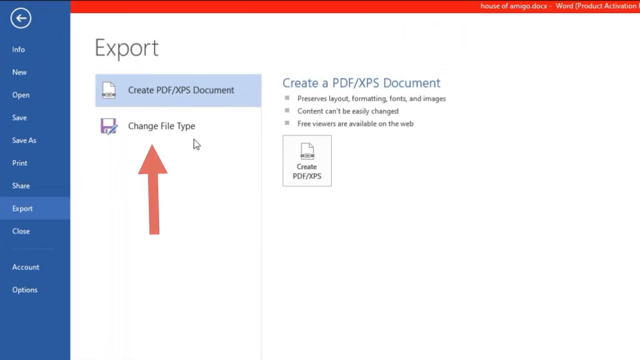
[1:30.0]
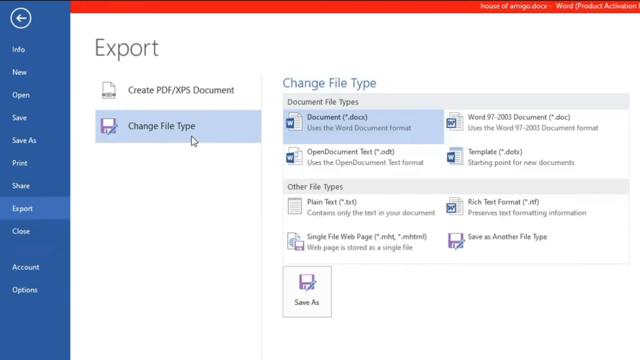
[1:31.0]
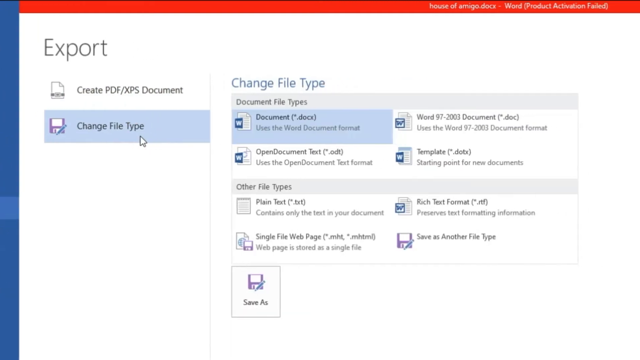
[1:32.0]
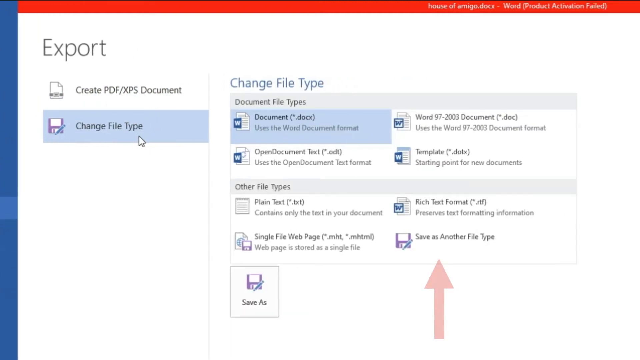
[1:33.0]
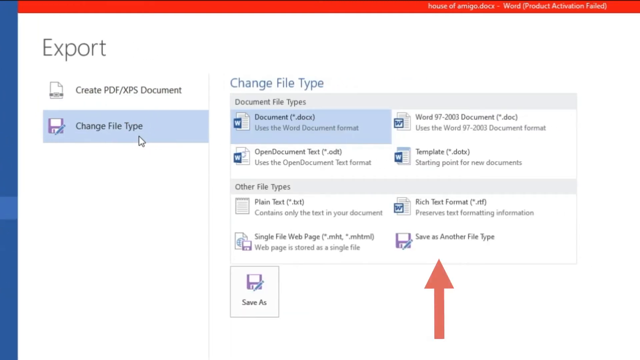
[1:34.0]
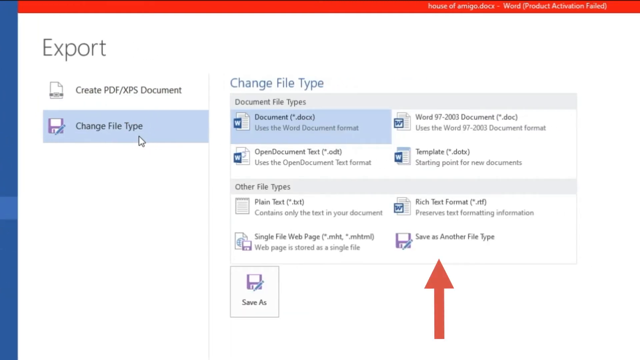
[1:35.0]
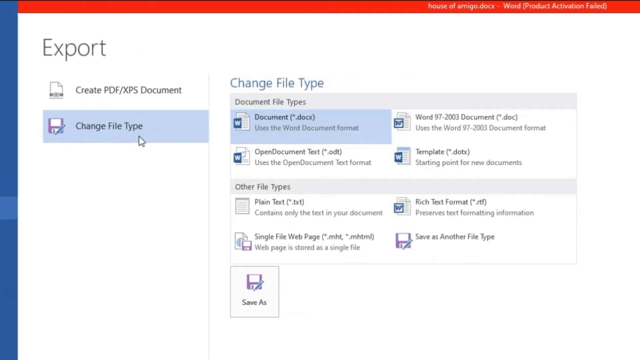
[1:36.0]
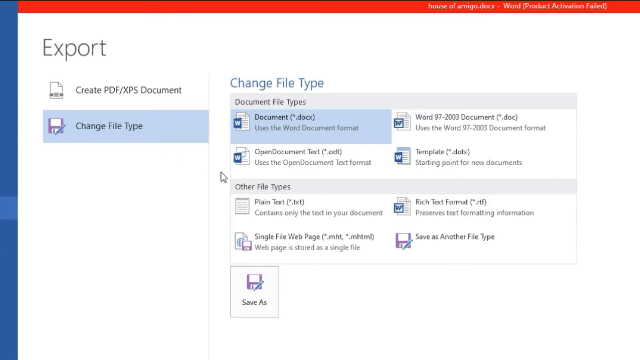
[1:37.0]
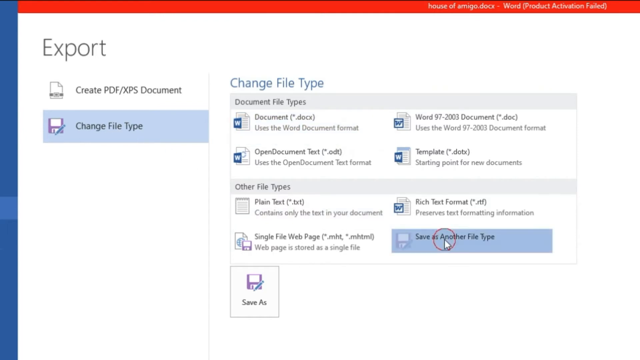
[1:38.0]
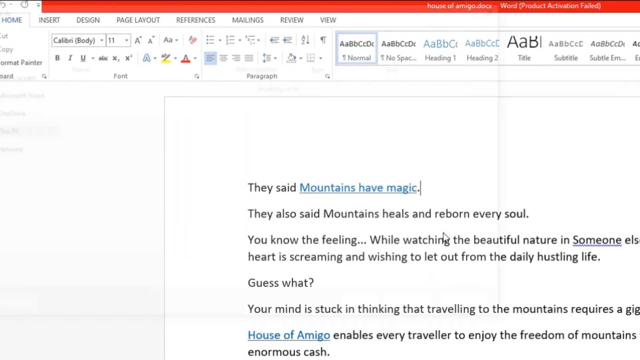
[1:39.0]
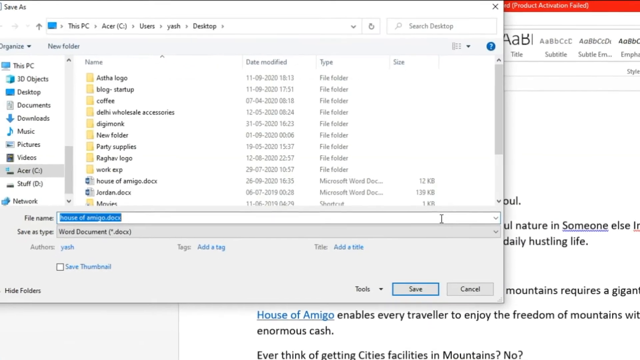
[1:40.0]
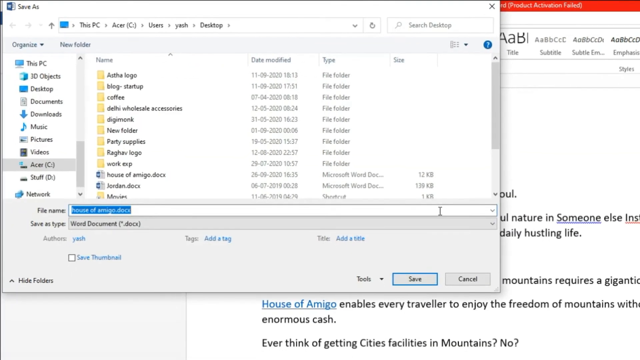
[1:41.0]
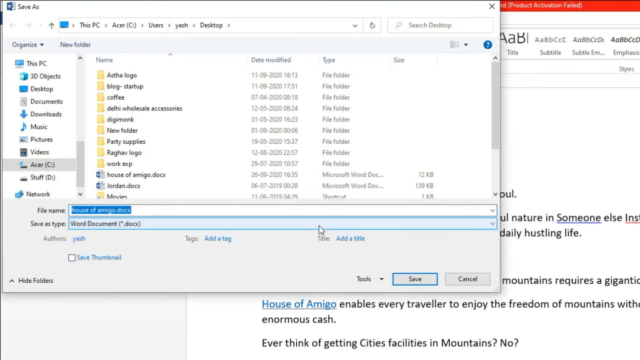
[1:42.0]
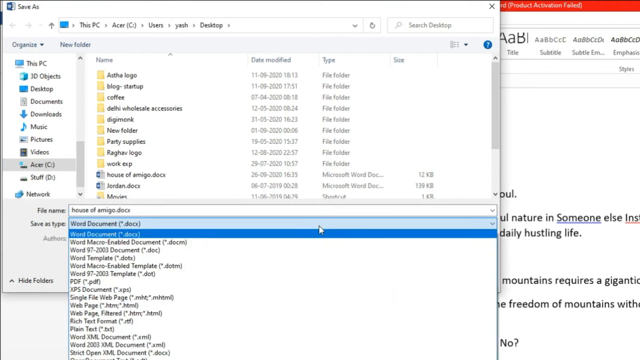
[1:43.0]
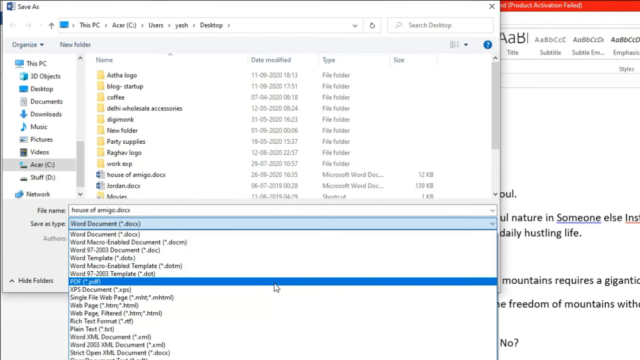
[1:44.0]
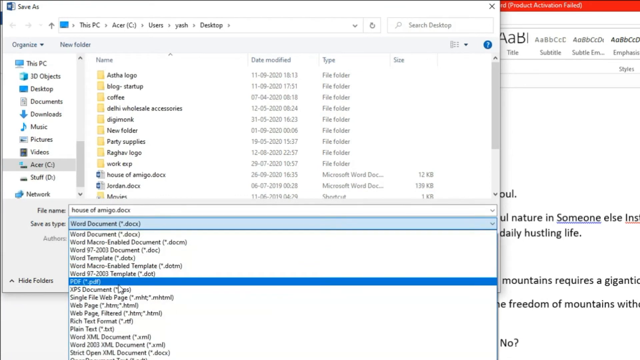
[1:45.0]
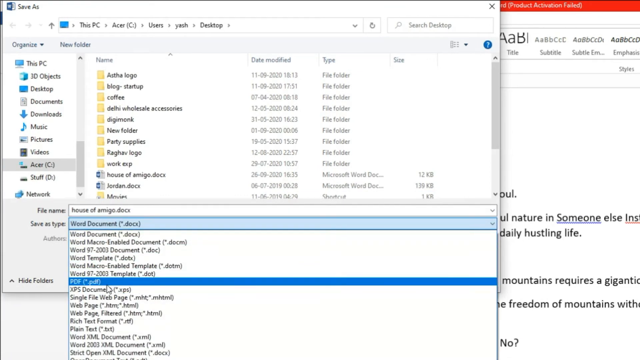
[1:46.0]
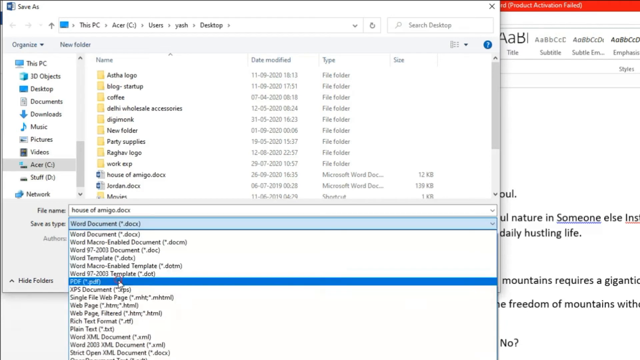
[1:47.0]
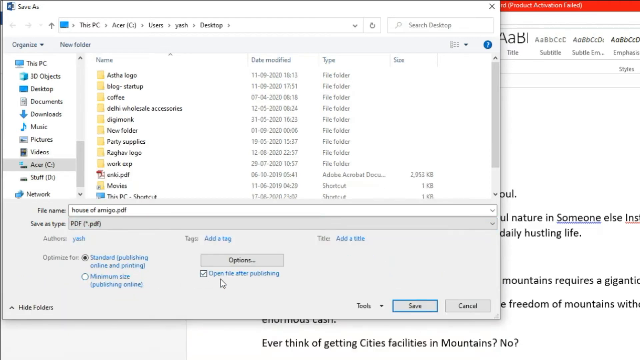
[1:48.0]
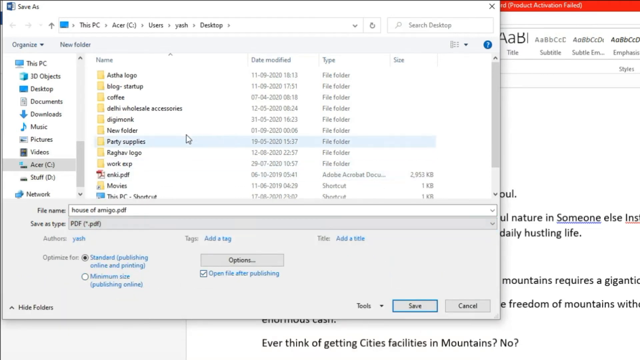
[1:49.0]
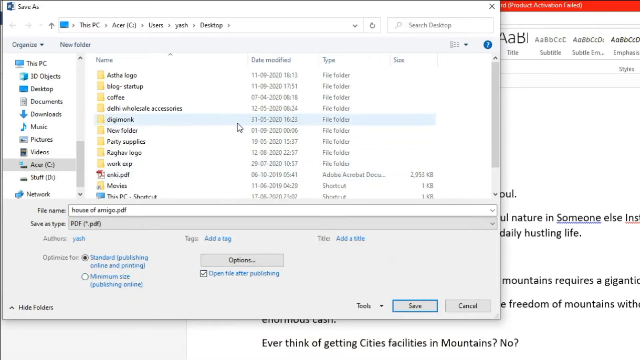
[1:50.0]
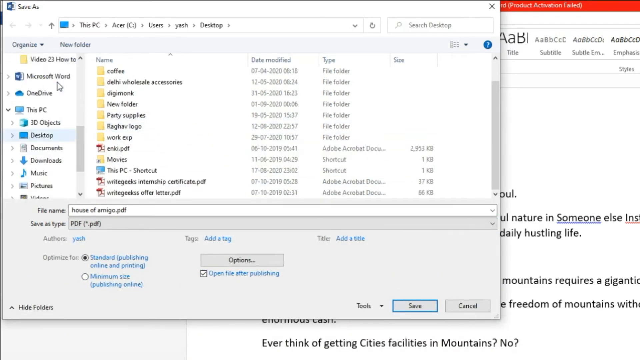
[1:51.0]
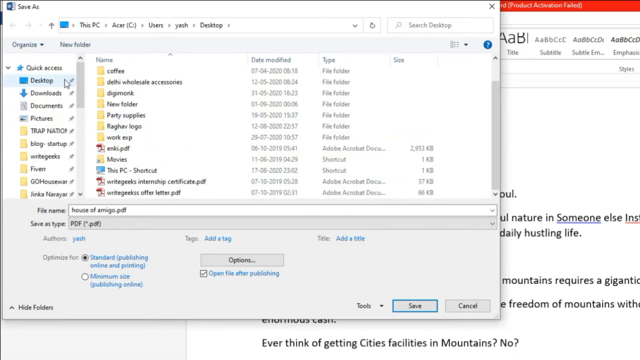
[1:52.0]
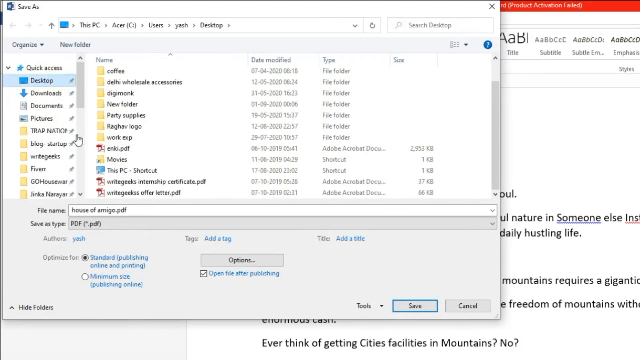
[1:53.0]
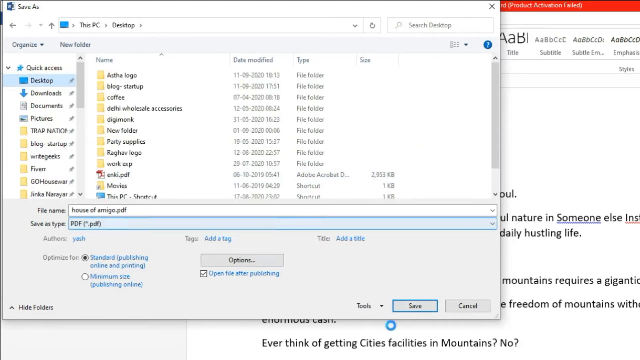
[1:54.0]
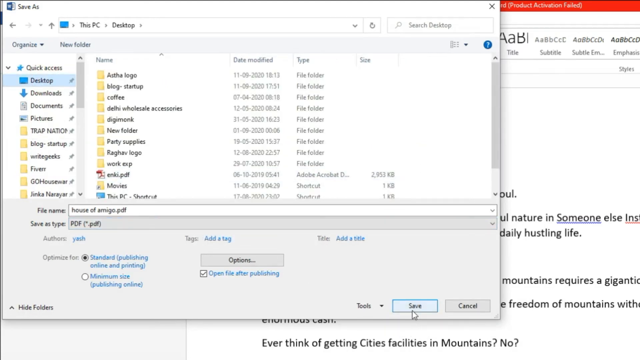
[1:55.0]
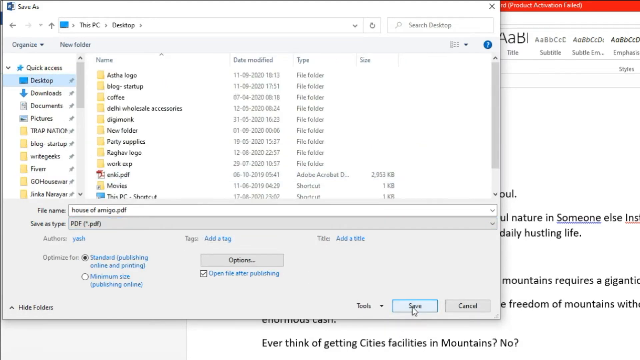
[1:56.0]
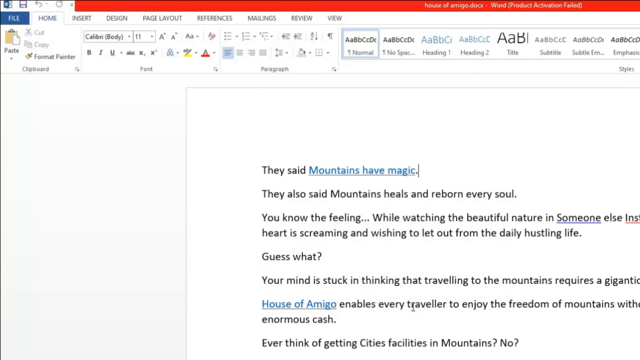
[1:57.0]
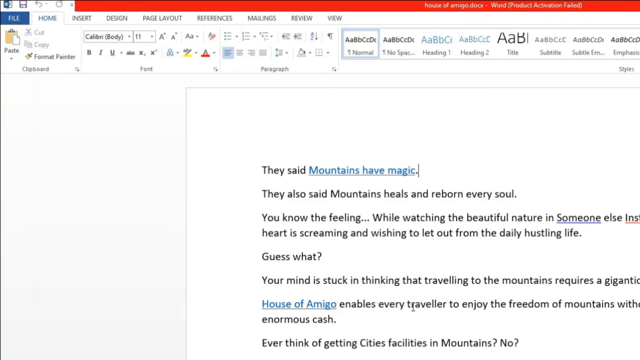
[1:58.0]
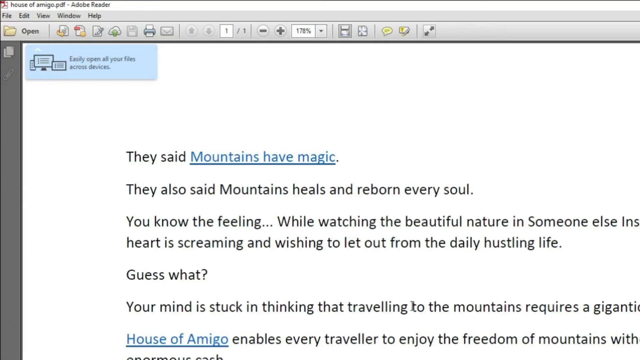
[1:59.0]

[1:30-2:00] The screen recording continues with the export page loaded after moving from File to Export. A button with a red arrow reads "change file type"; the user presses it, and a "change file type" title appears with a grid of documents. In the bottom right, "save as another file type" briefly has a red arrow pointing at it, and the mouse moves over it and clicks it. The original document reappears, zoomed in on the top left corner, and a file picker window shows up with "save as" in its top left. The save-as-type drop-down is clicked, and the mouse scrolls down to the PDF selection, moves horizontally from side to side, and the PDF option is selected. The mouse moves to the top left of the file picker dialog, where there is quick access and a desktop, and then the save button at the bottom of the screen is pressed.